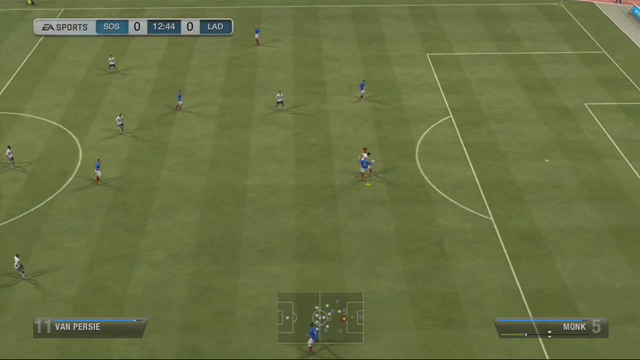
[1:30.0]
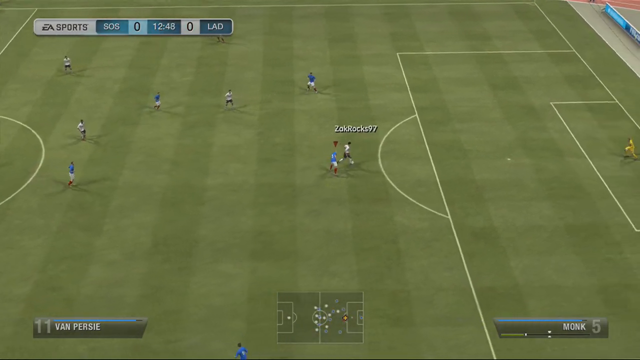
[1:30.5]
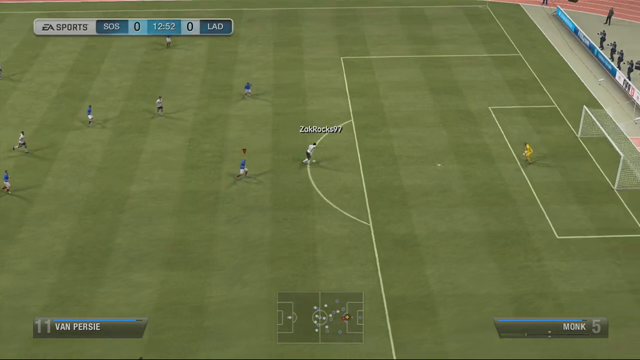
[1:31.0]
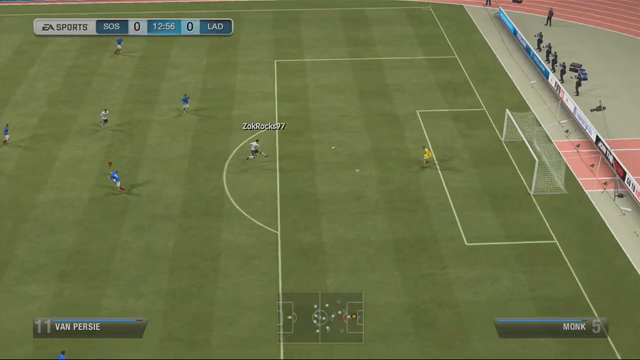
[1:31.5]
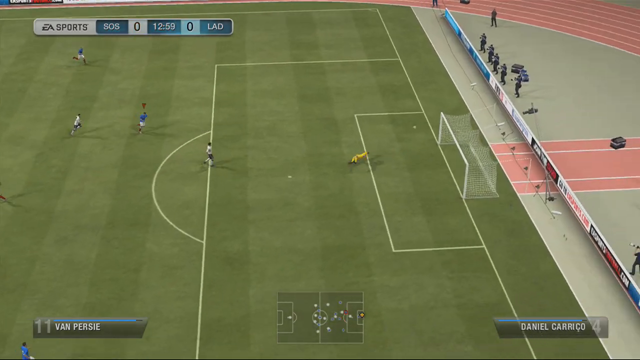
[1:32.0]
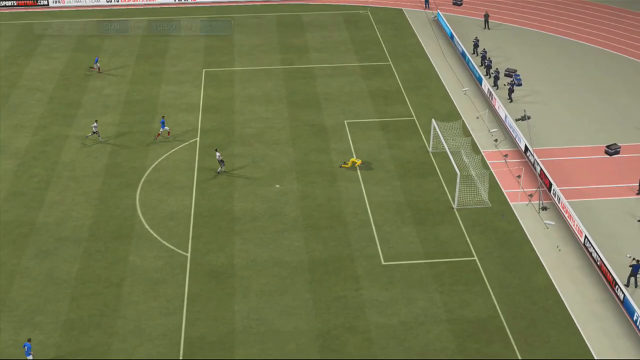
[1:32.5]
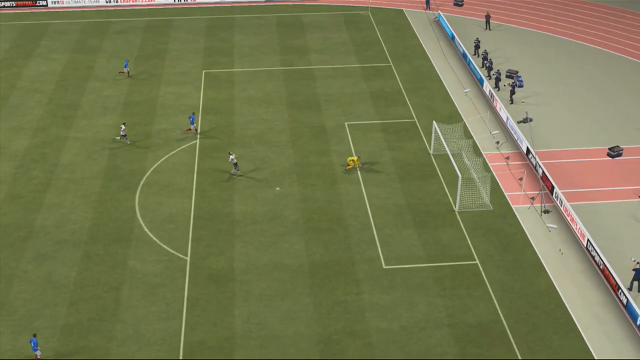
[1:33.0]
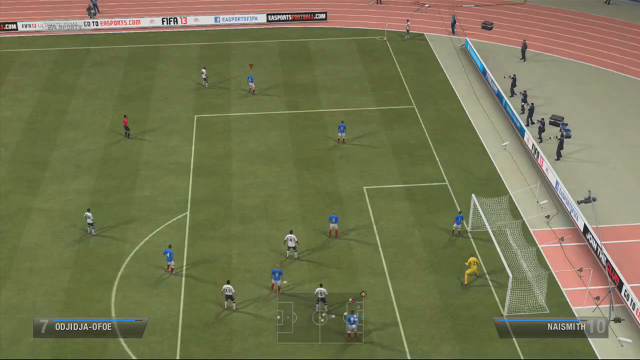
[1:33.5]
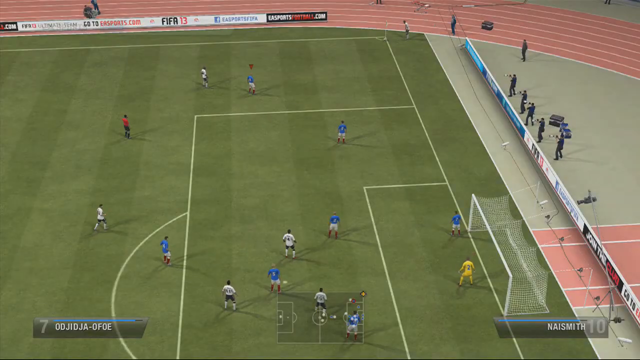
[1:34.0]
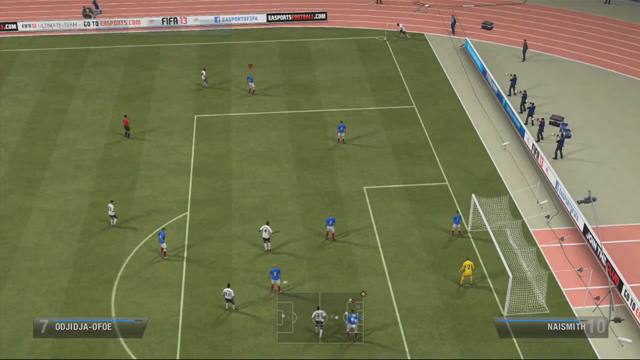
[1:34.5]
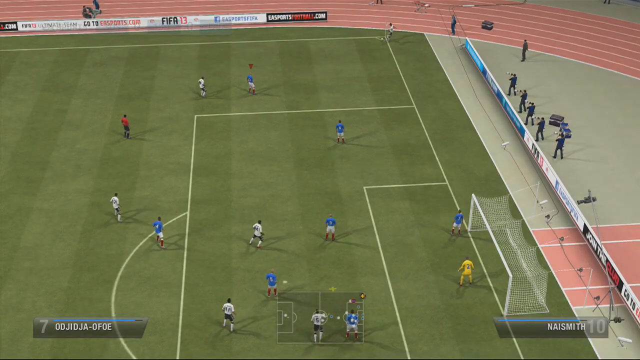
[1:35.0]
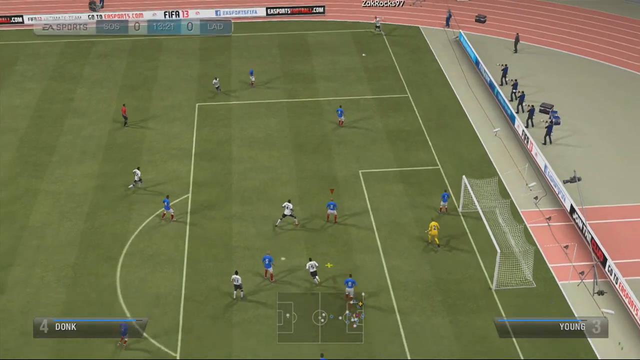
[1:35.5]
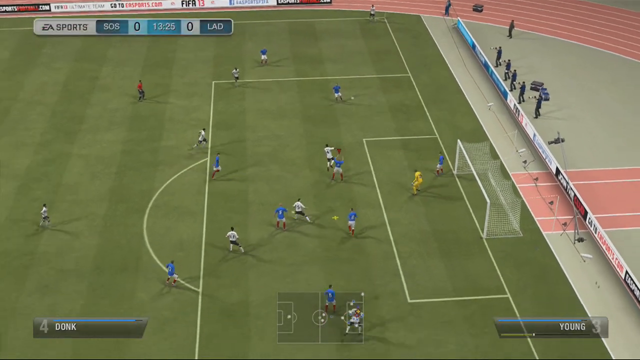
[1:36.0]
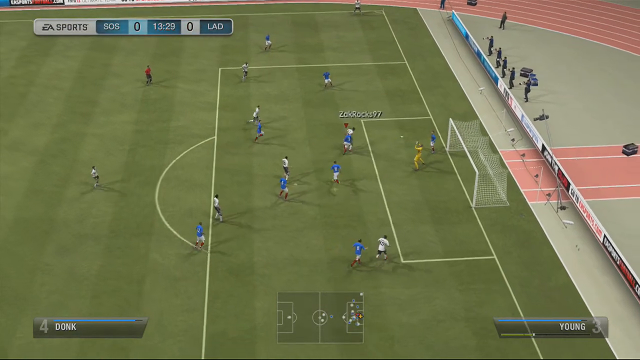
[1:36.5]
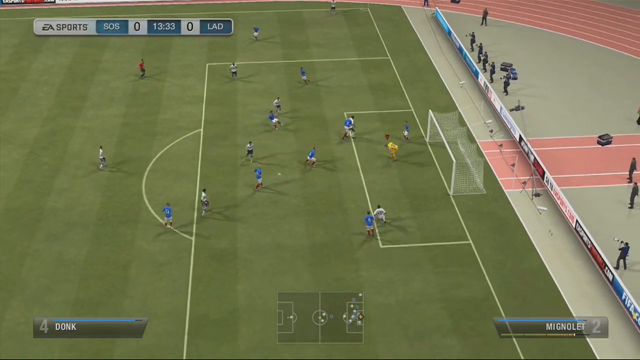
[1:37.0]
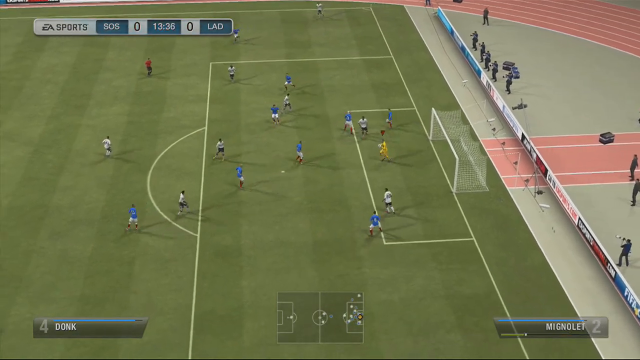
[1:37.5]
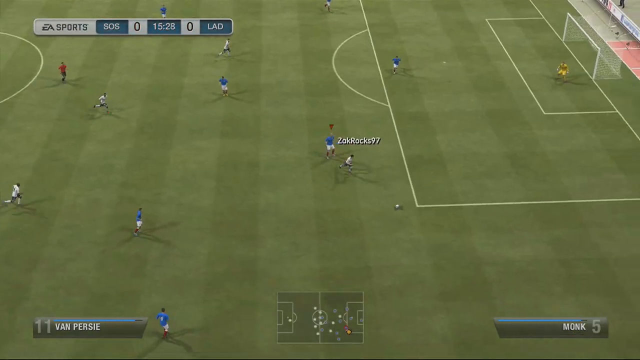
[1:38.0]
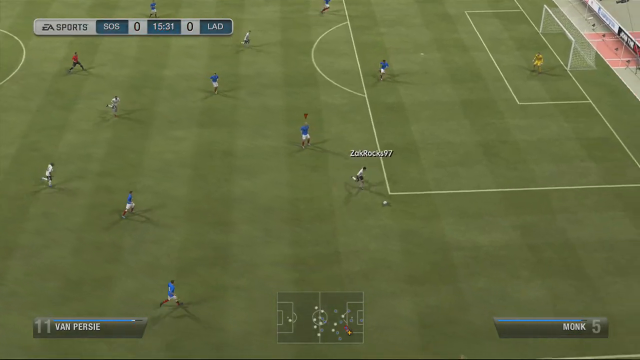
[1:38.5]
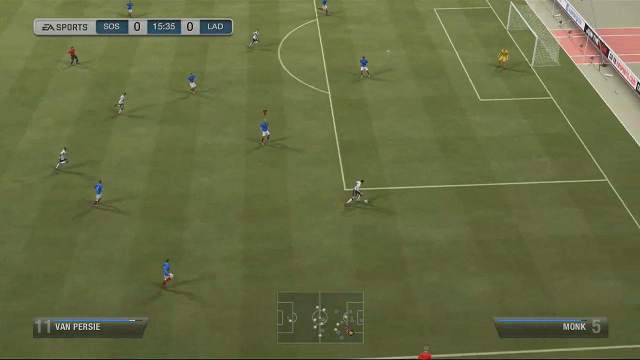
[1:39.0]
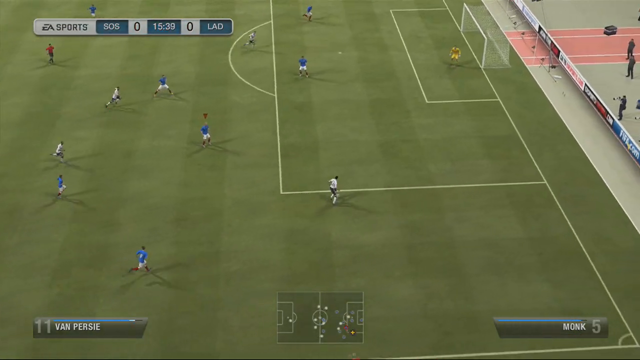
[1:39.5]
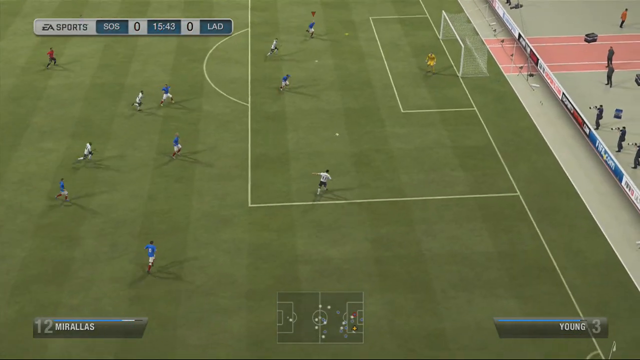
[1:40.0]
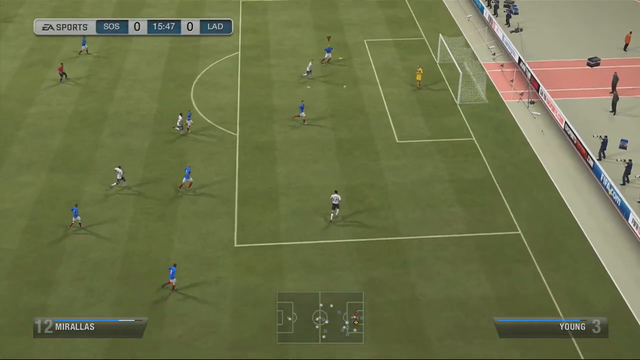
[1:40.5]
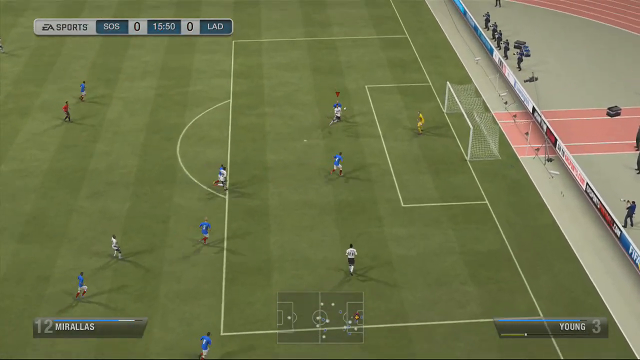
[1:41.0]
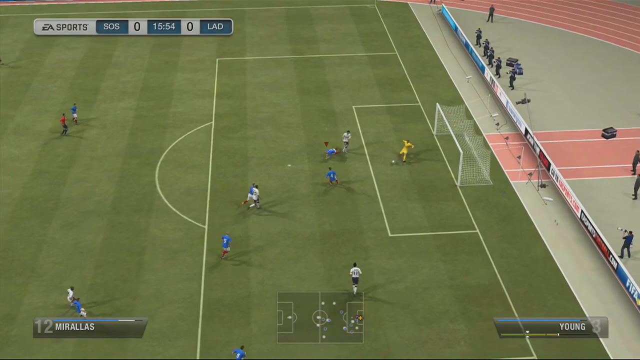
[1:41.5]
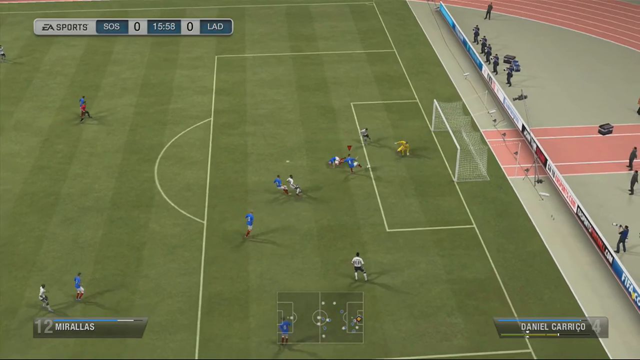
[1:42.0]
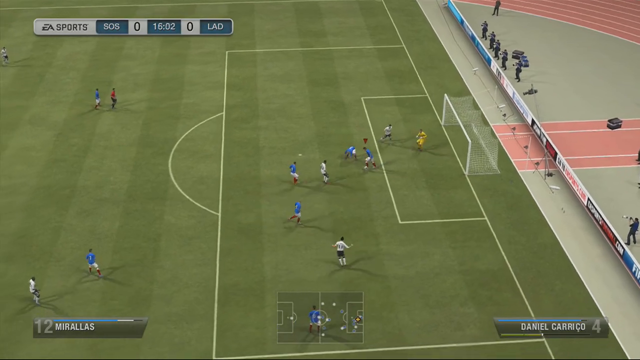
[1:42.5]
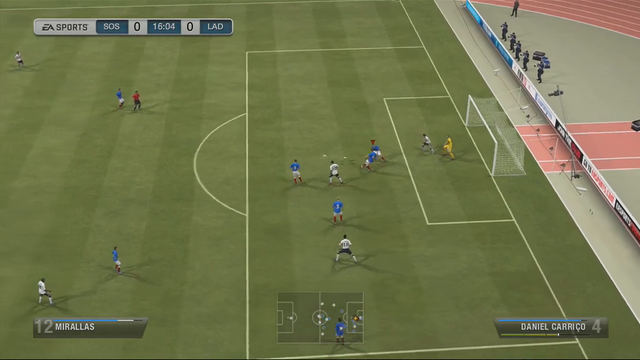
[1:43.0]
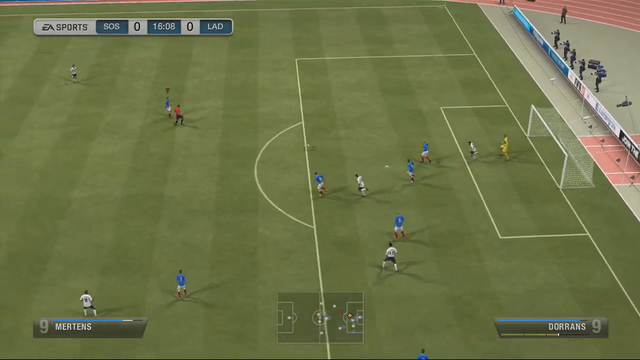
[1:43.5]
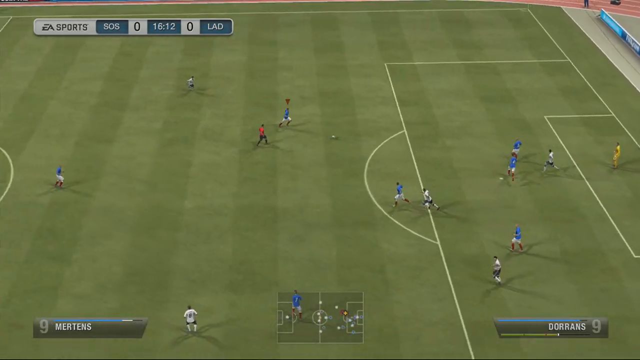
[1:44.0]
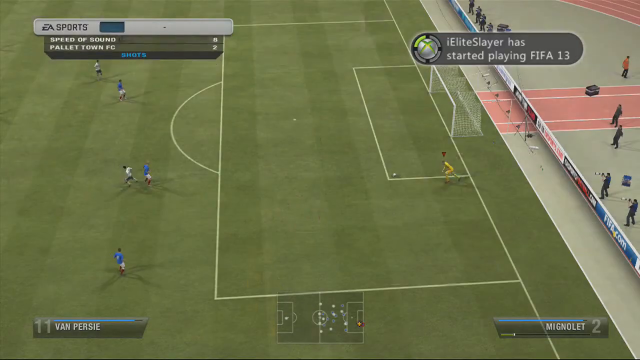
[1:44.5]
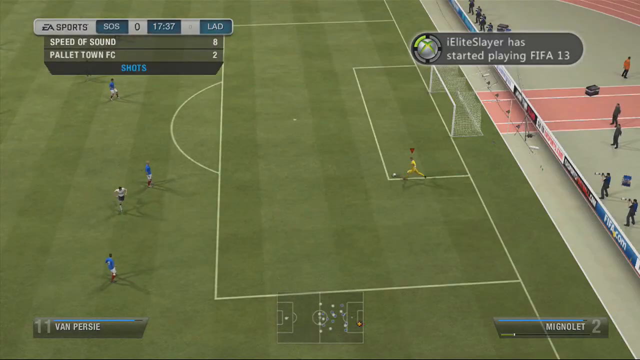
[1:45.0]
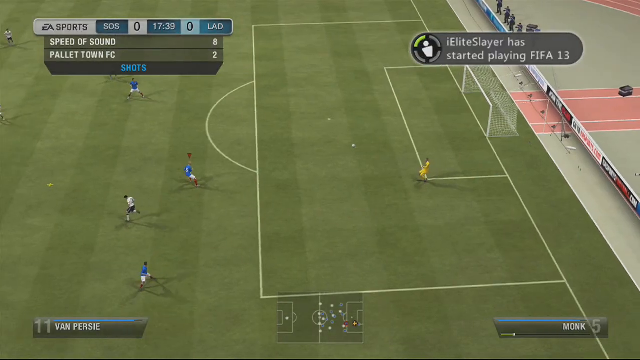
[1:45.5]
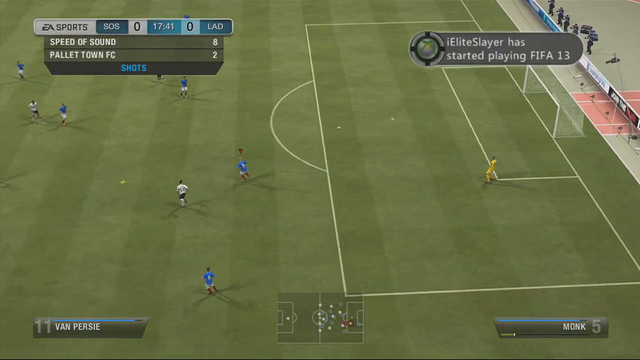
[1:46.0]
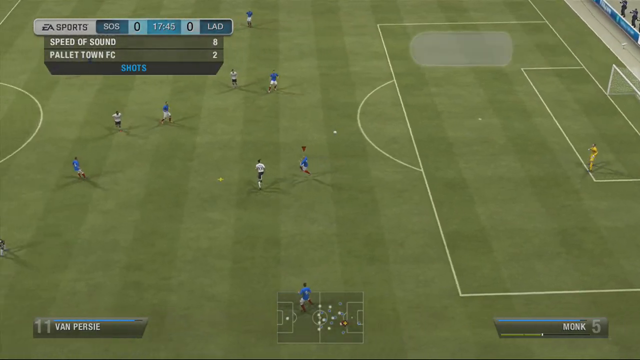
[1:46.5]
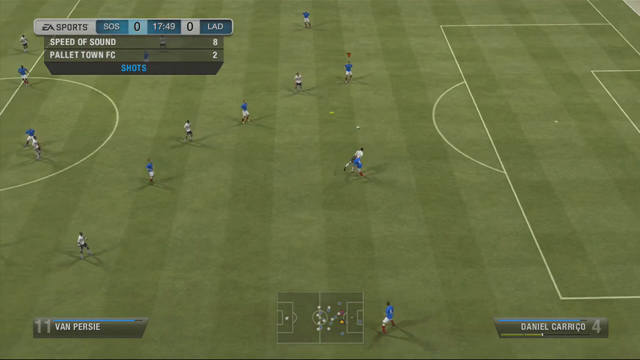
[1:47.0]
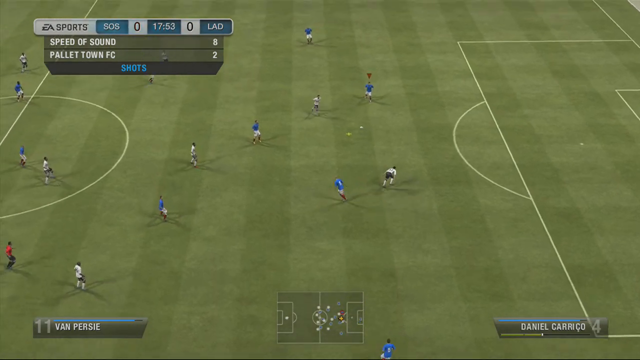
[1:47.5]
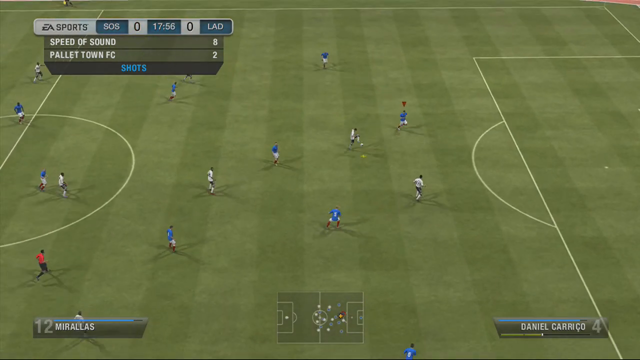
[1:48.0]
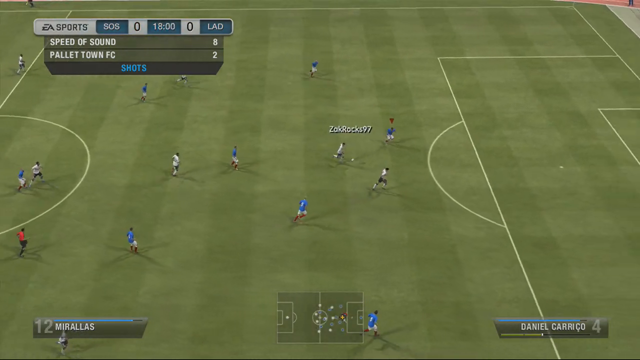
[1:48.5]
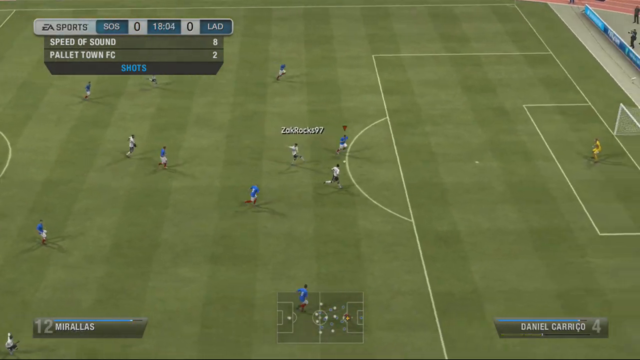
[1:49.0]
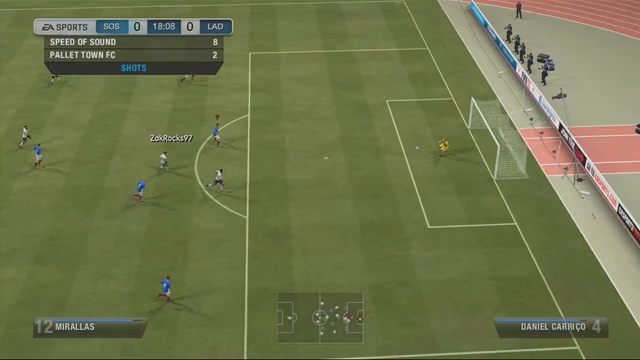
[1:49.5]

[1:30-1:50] A soccer video game is shown on a light green and darker green striped field, viewed from above, looking down on the players. One team wears dark blue uniforms and the other light blue. A group of players charge toward a goal, a white square with a net hanging off the back of it, with the goalie in a yellow uniform standing in front of it. A player kicks and misses. A close-up then shows him in a short-sleeved white shirt with the number 11 and the word "Percy" across the top of the back; he has brown hair and holds his arms out in front of him. In the top left corner is a white stripe with the word "sports" in blue, then a small blue square with "SOS" in white, a white square with "0", "15 minutes 36 seconds" in a blue square, another white square with "0", and another blue square with "LED" written in white.